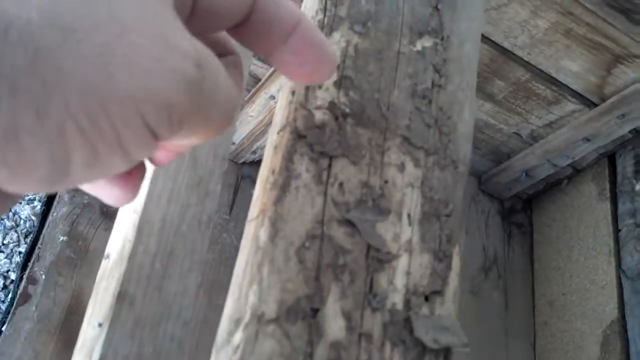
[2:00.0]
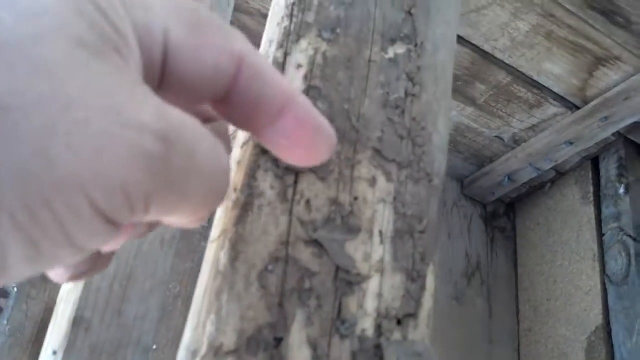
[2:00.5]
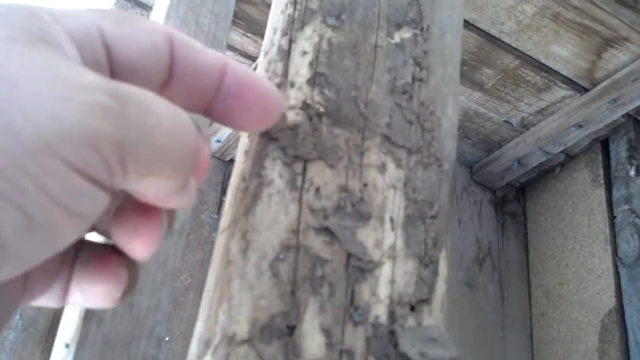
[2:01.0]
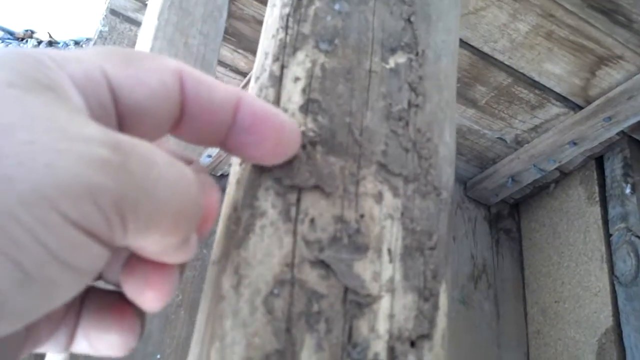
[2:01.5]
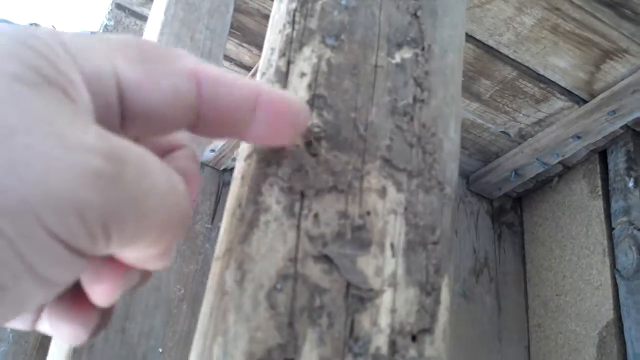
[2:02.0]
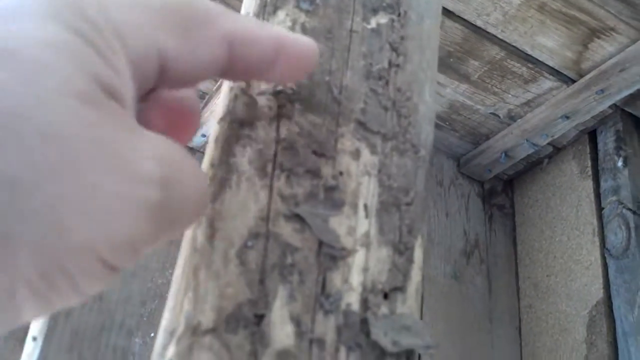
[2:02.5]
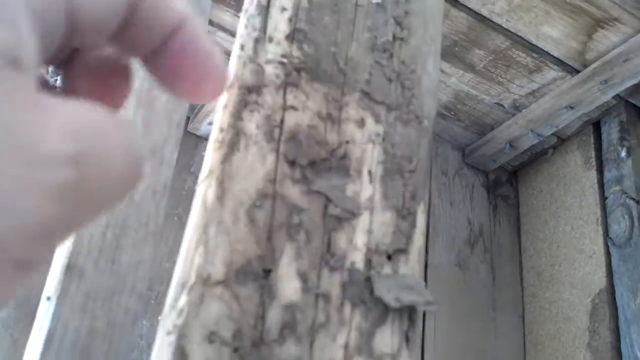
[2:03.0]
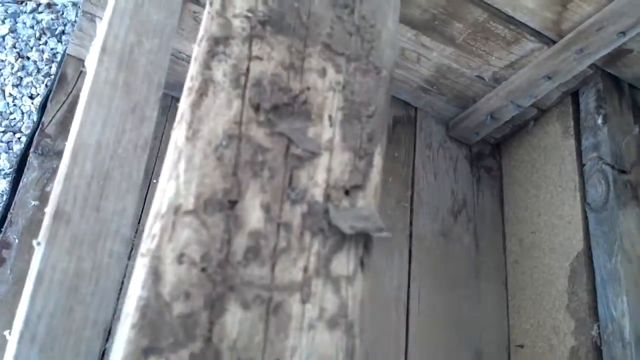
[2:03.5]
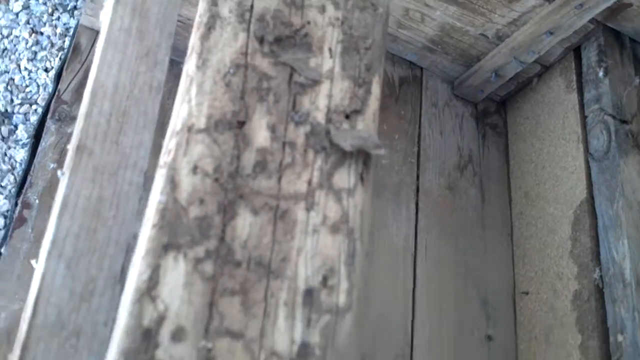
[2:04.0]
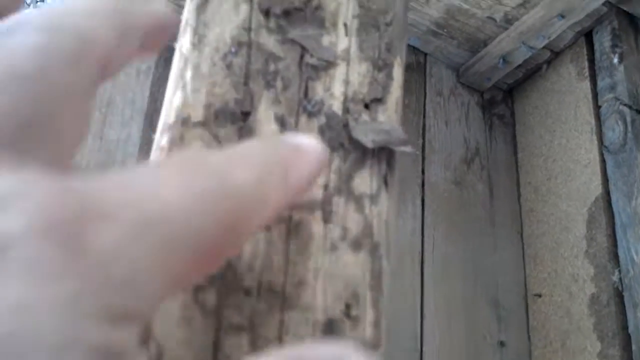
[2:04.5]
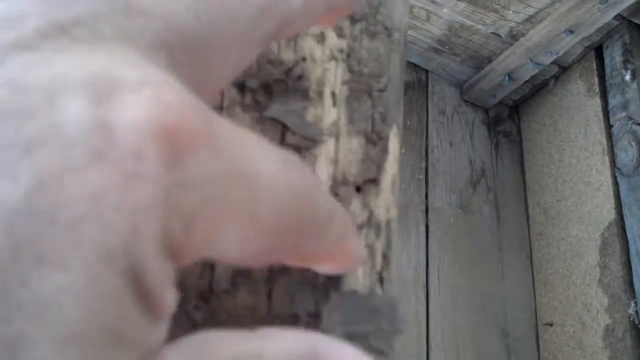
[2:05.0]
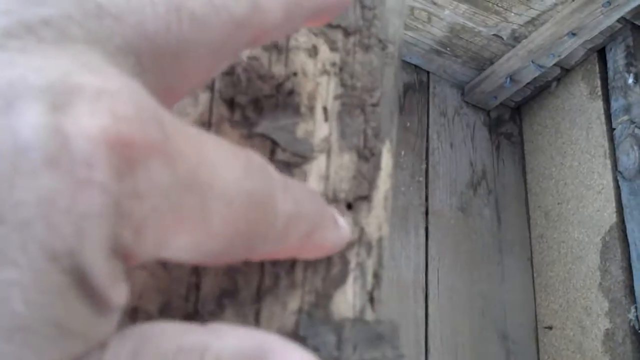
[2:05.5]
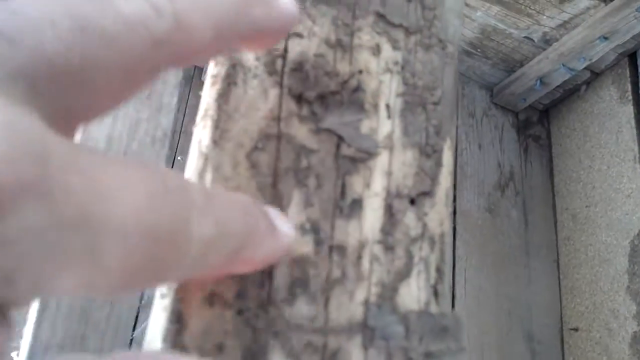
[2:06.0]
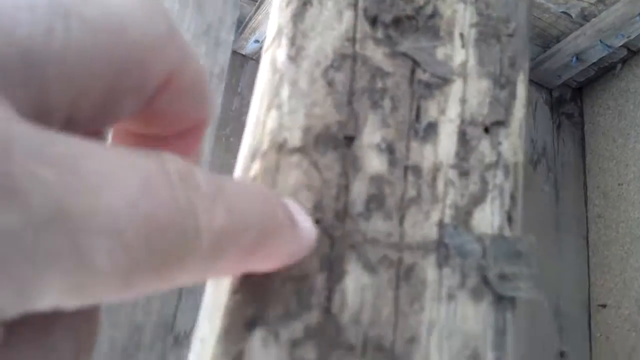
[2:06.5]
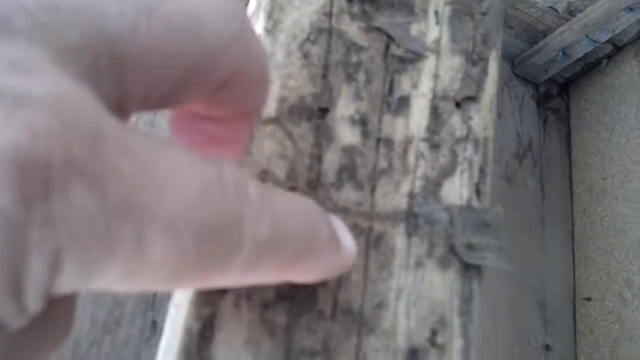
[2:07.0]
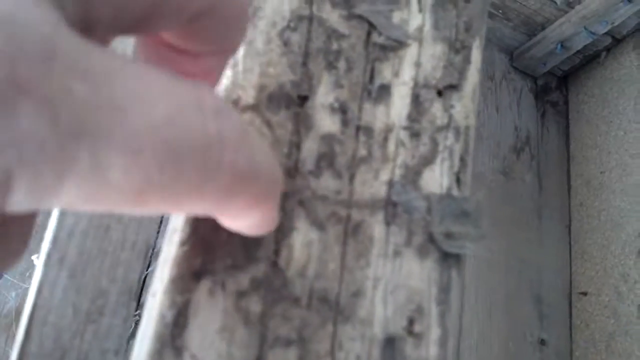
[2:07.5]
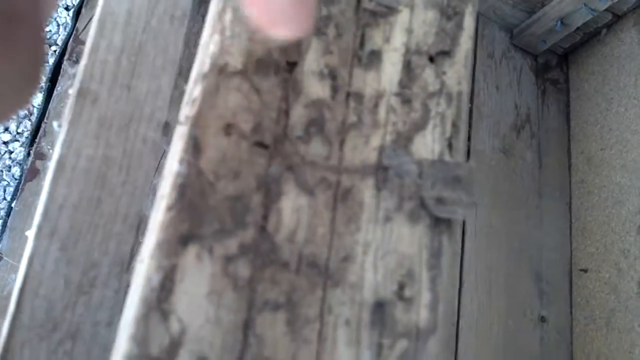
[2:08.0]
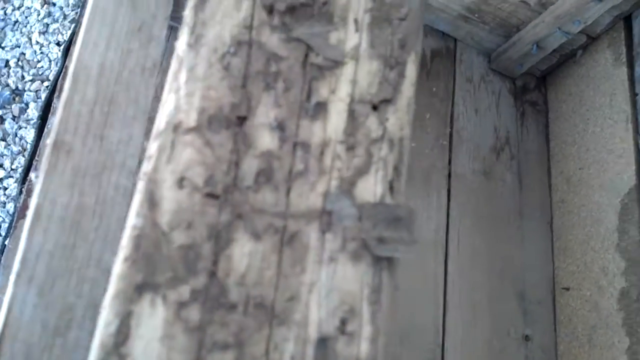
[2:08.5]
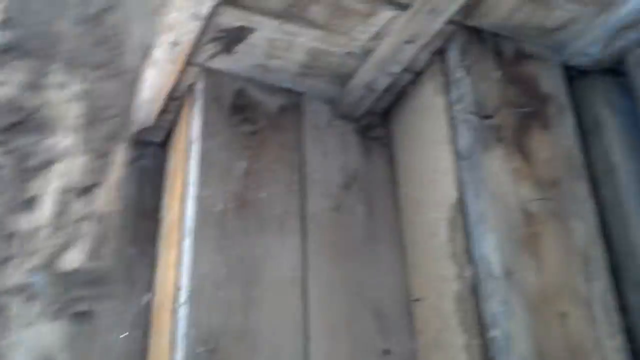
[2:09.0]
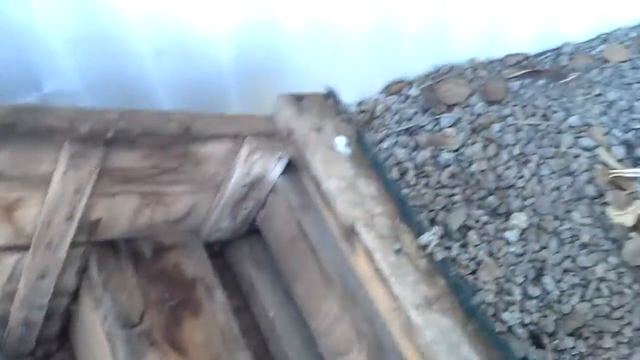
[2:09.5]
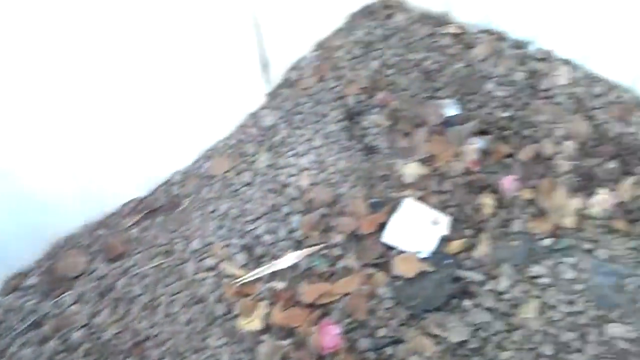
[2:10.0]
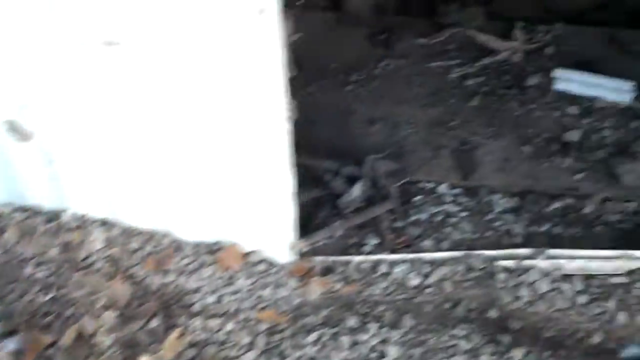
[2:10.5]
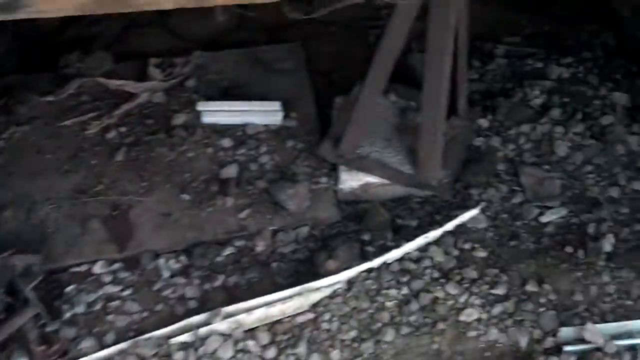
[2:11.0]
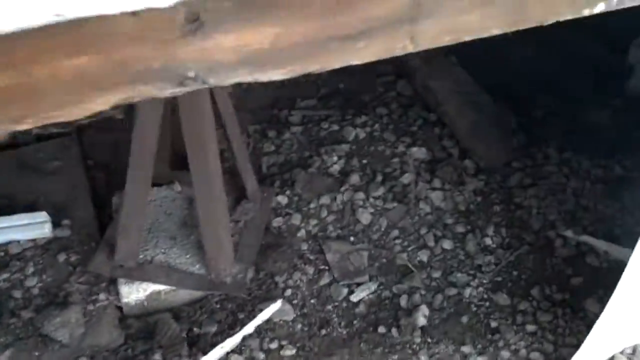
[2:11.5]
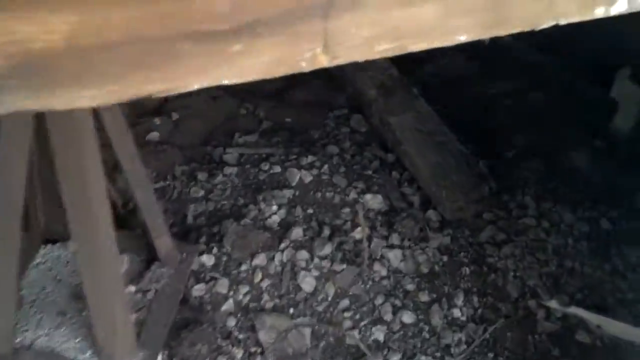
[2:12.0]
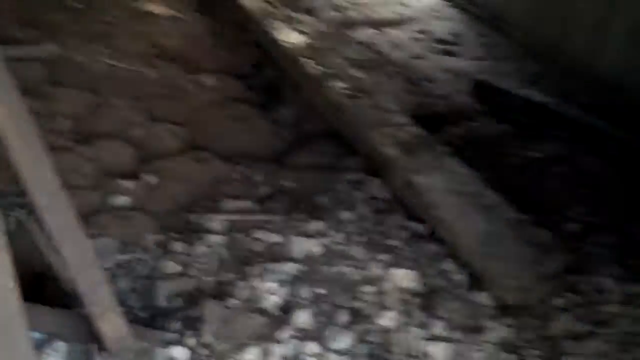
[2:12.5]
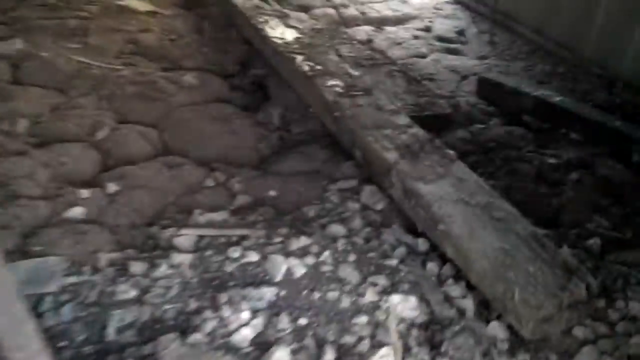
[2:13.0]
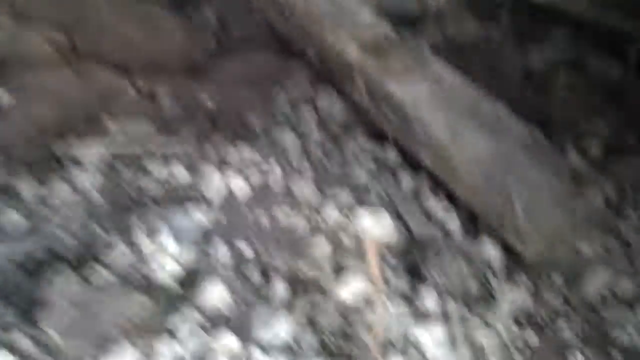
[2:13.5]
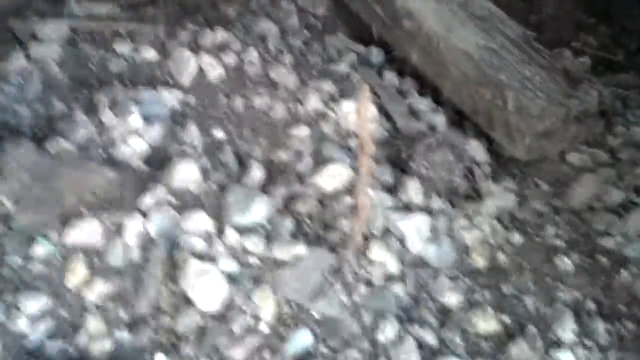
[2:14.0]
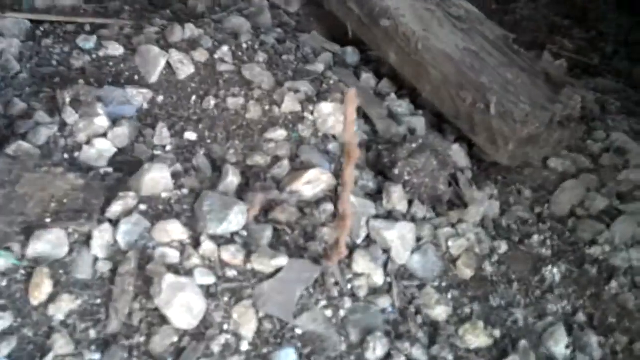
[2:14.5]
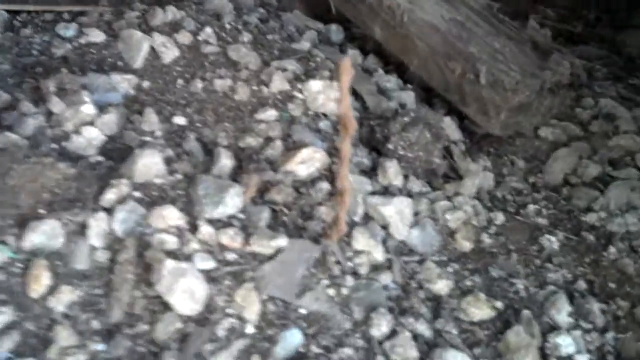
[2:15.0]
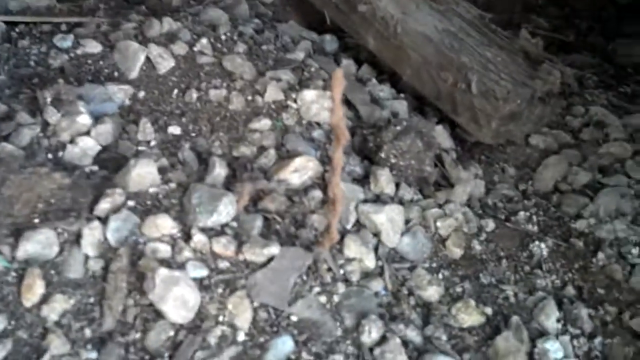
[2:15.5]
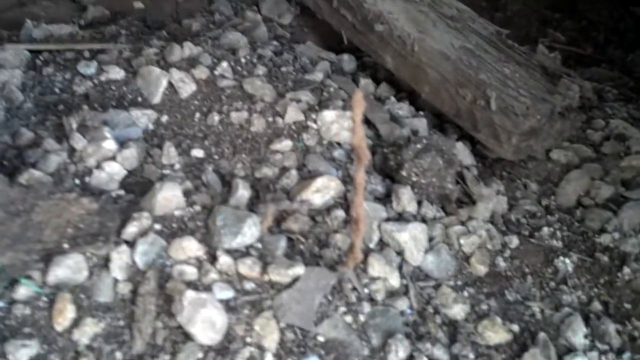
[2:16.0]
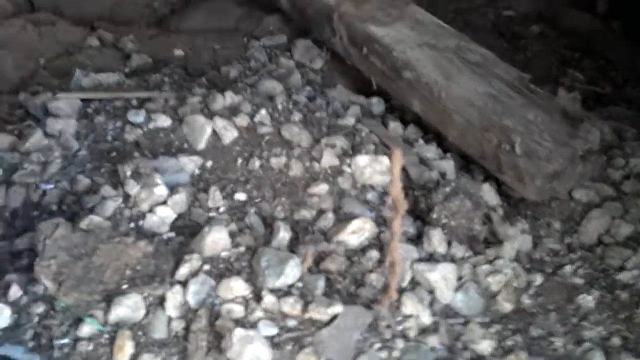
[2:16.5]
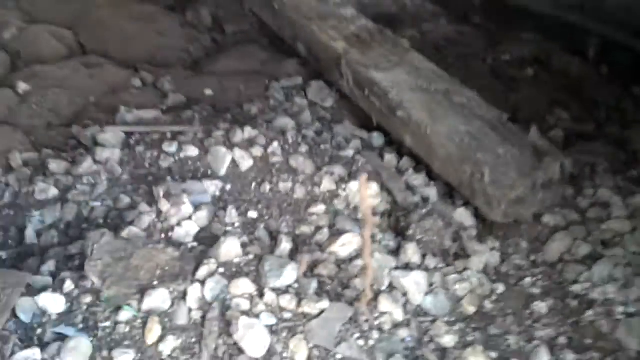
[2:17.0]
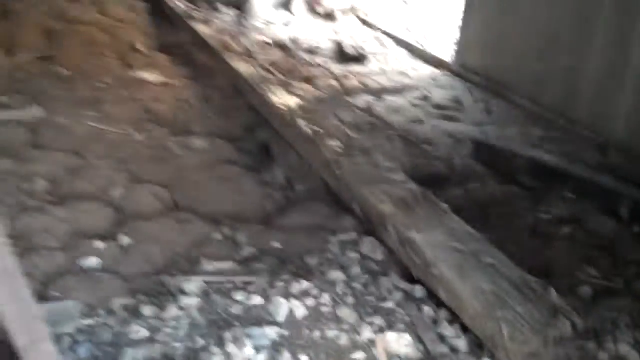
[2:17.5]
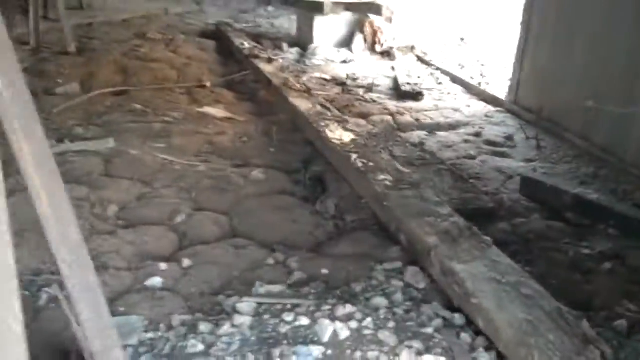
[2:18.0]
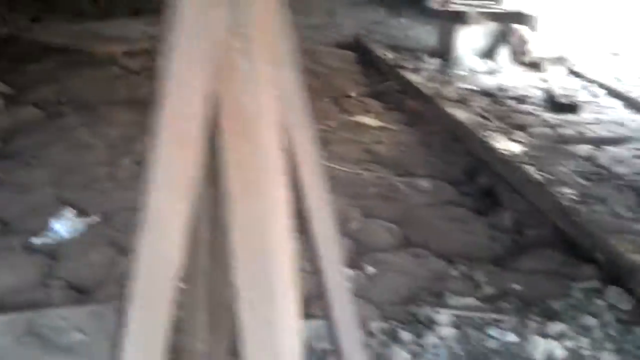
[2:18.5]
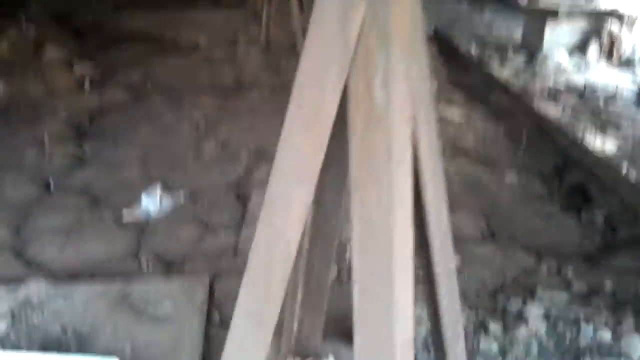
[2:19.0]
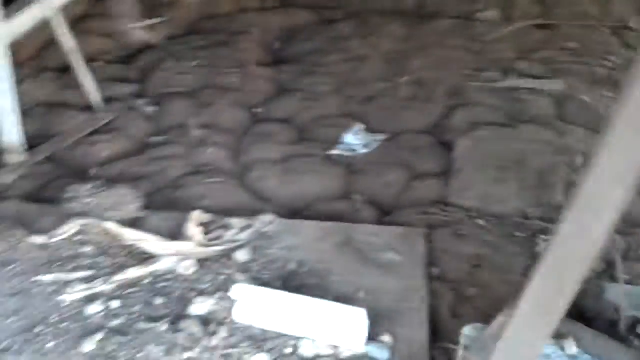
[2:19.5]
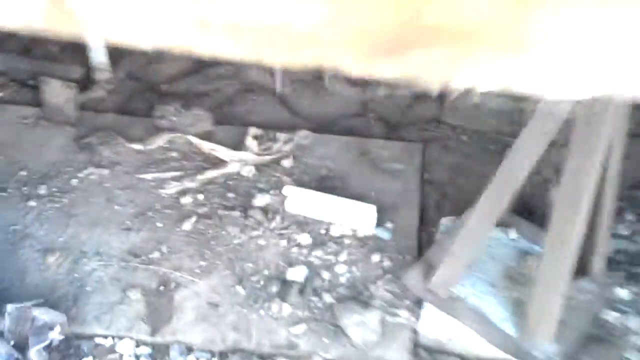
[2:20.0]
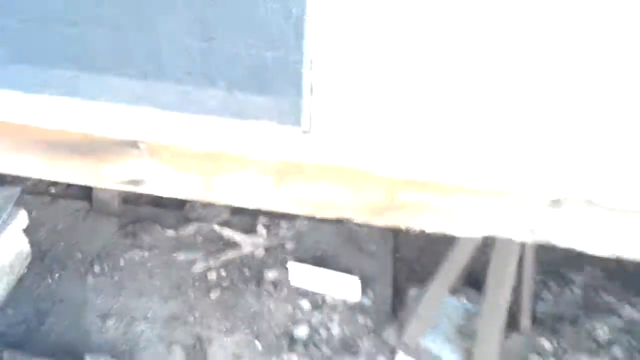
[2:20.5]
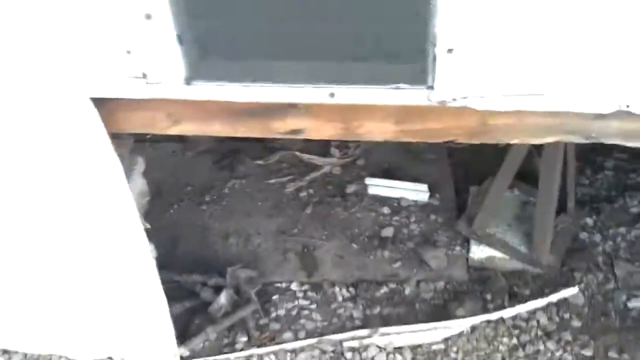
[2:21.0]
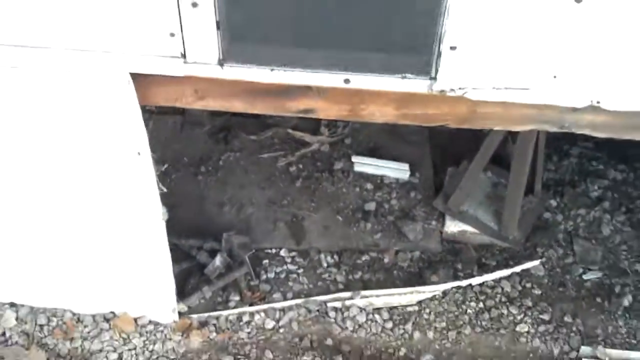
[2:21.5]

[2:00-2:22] The finger that was pointing at the decay now flakes pieces off the rot, flicking a couple of them away. The camera pans back to the second crawl space and goes inside, where there are quite a few little pebbles or rocks, shown in close-up. The camera comes out of the crawl space again to the overturned steps, pointing at and flicking the rot, then goes back into the crawl space, where white and gray rocks are visible. In the middle there is an unclear upright, lighter-colored object, almost like a little twig, possibly growing out of the ground like a small branch, which may be what the camera focuses on. Daylight comes in from the other open area. The focus stays mostly on the rot of one piece of wood and the dark, dilapidated underside of the crawl space.